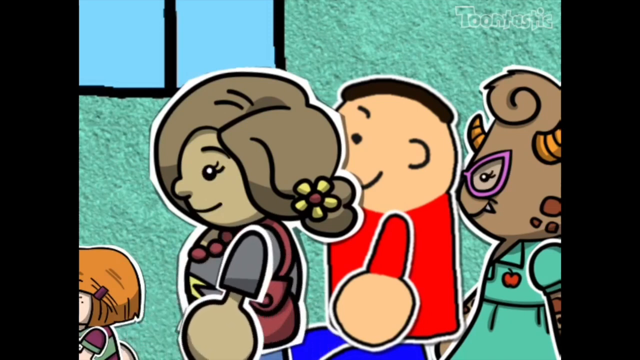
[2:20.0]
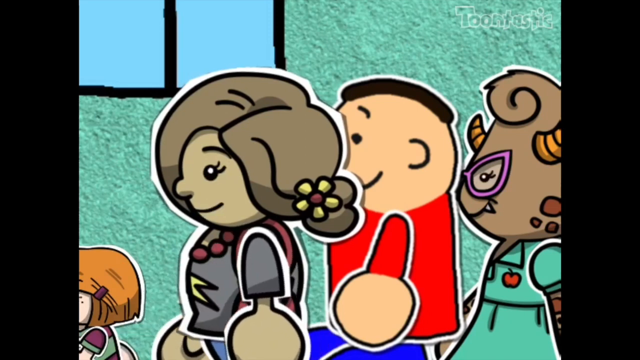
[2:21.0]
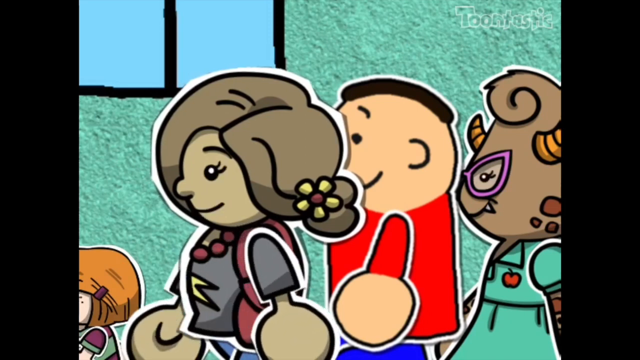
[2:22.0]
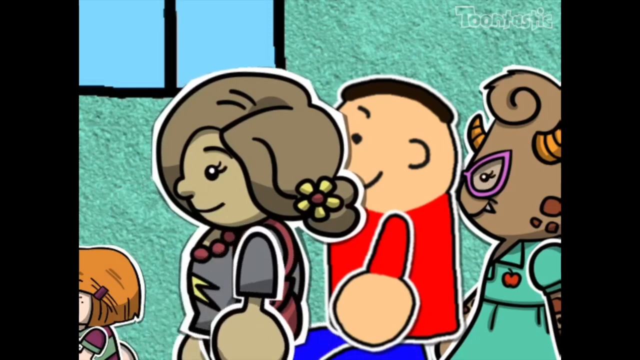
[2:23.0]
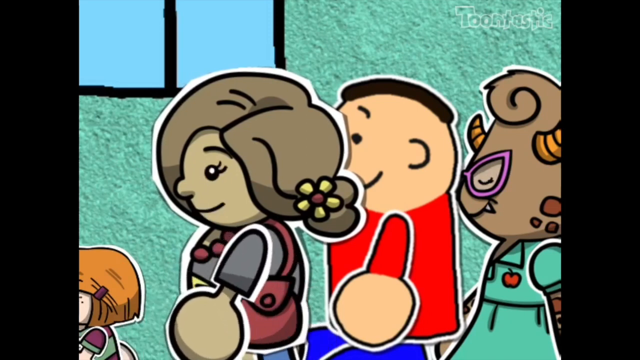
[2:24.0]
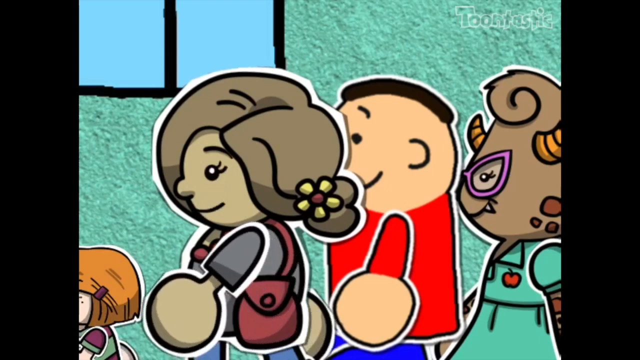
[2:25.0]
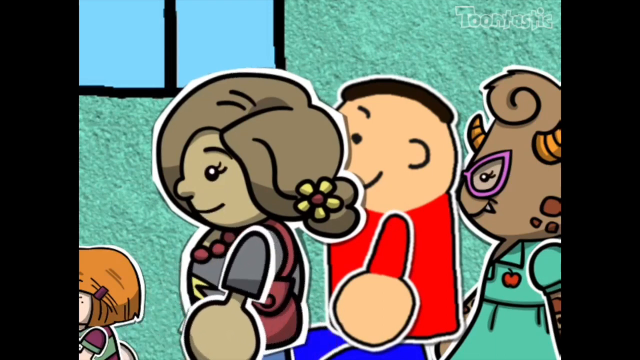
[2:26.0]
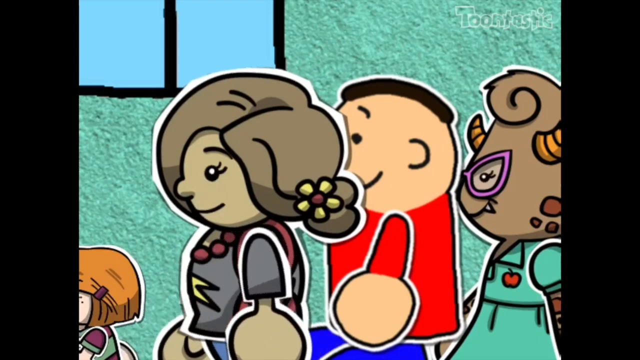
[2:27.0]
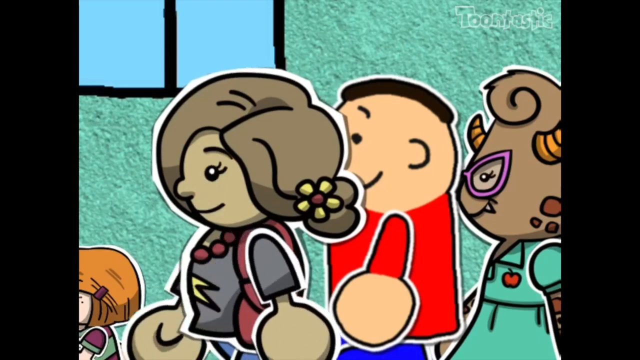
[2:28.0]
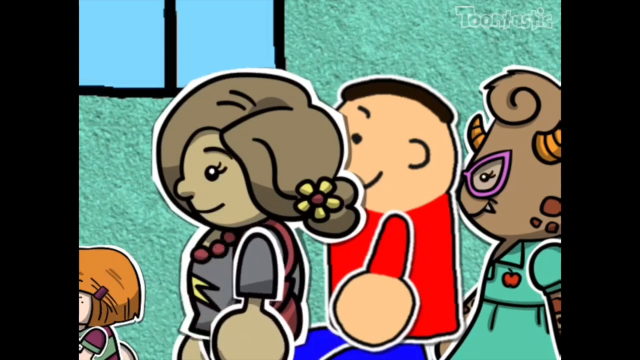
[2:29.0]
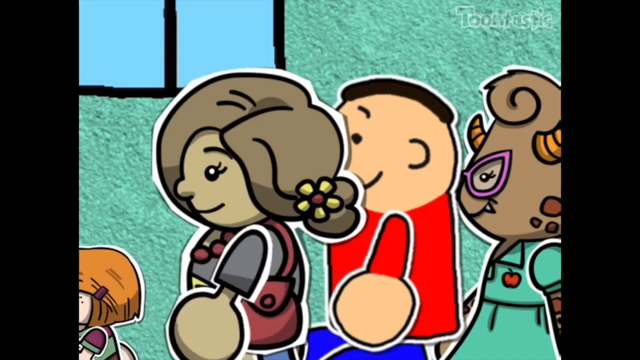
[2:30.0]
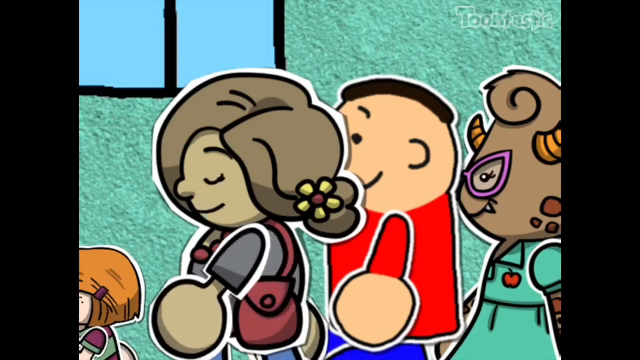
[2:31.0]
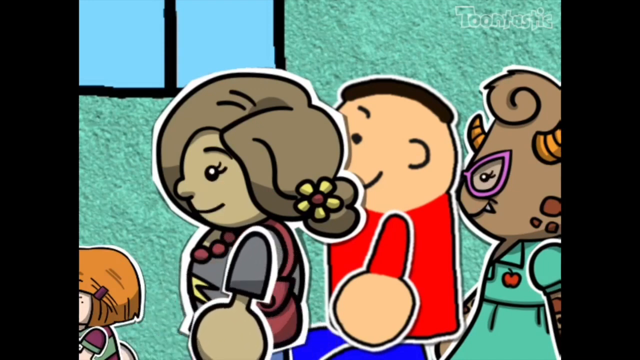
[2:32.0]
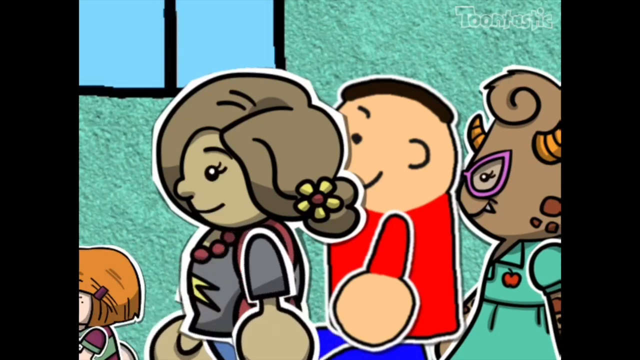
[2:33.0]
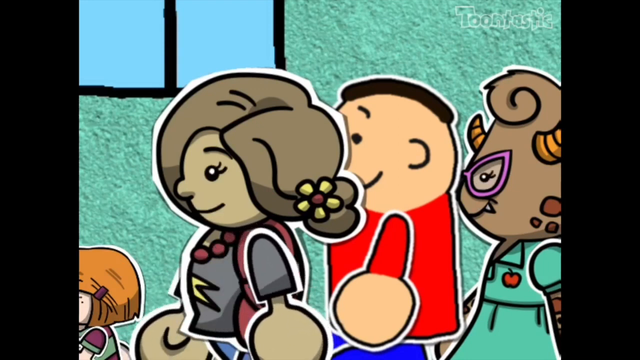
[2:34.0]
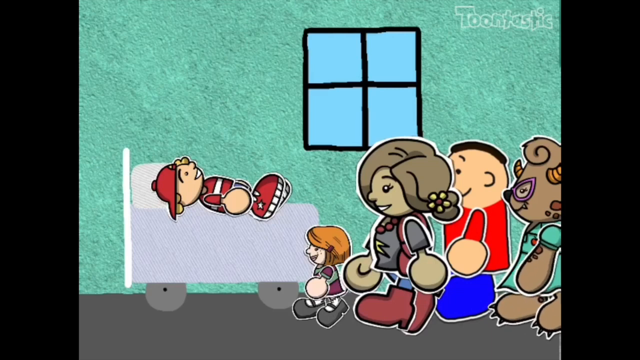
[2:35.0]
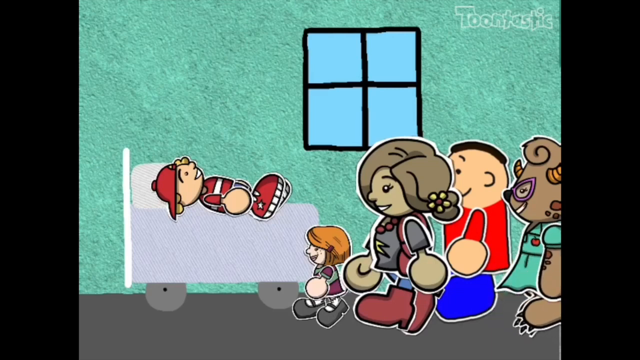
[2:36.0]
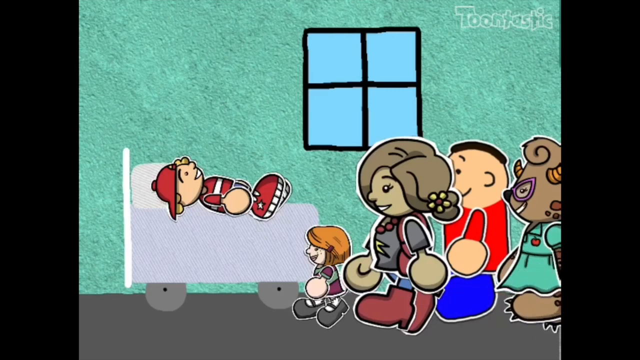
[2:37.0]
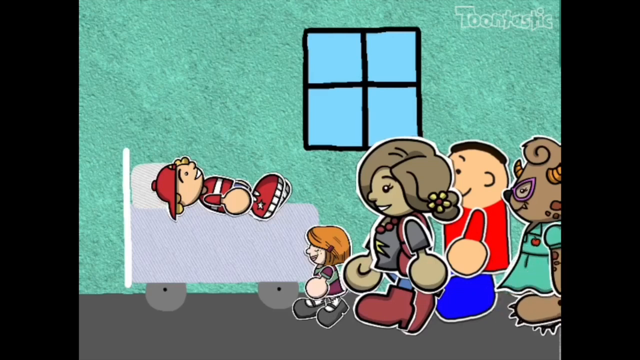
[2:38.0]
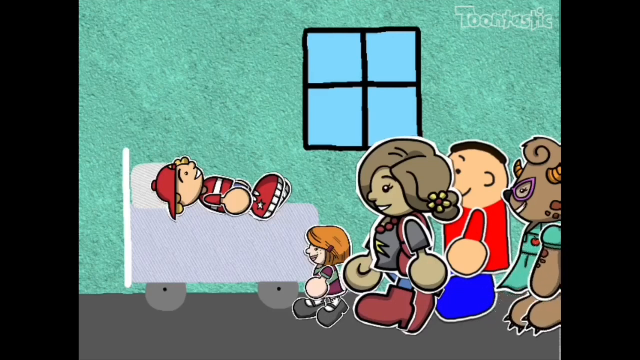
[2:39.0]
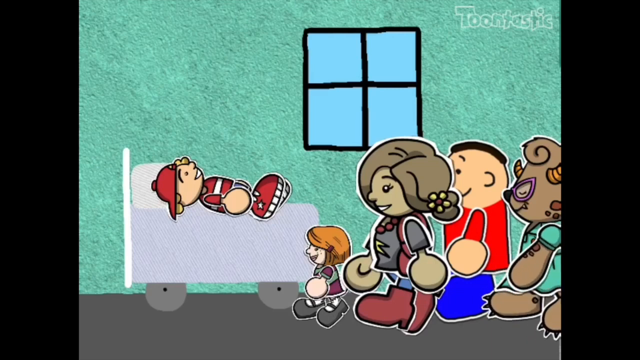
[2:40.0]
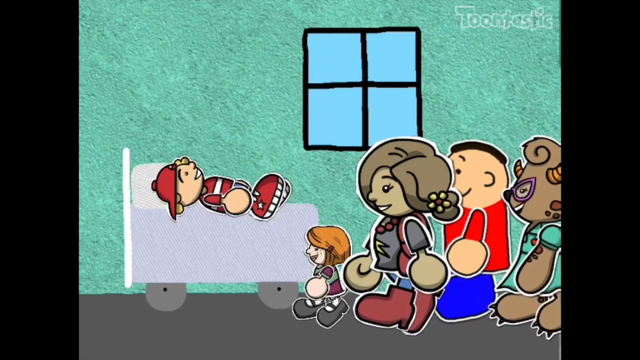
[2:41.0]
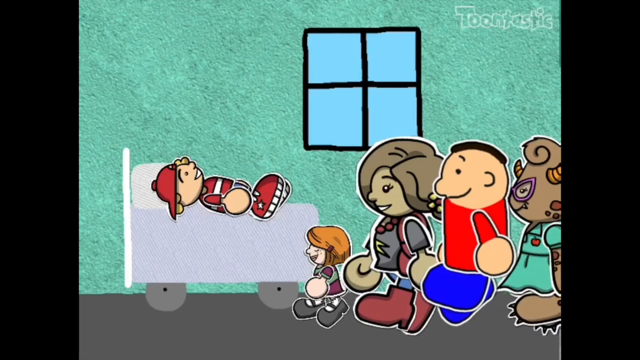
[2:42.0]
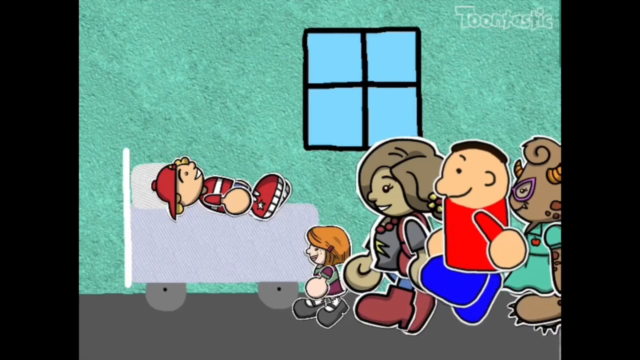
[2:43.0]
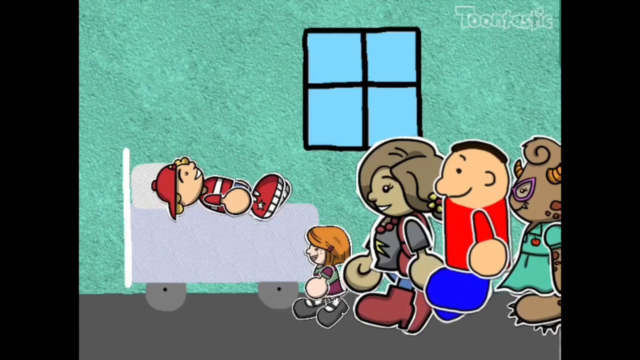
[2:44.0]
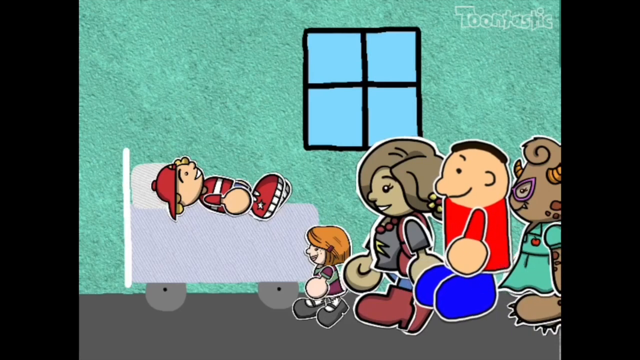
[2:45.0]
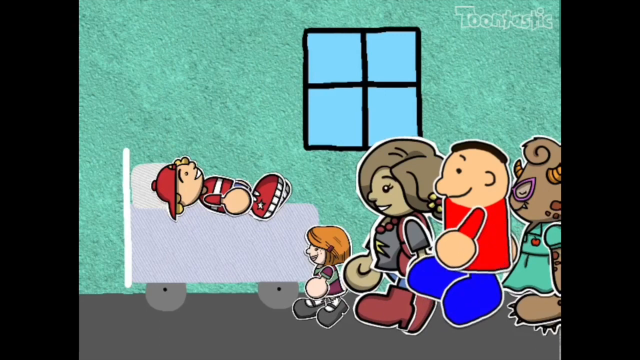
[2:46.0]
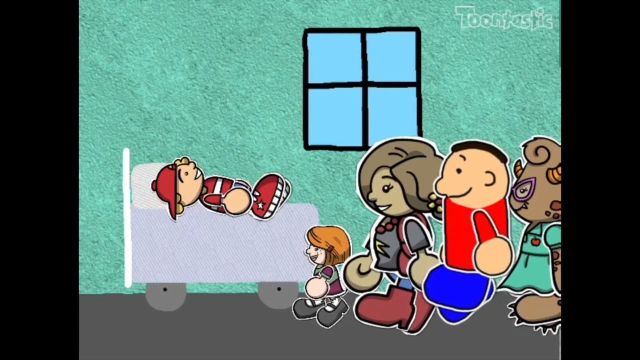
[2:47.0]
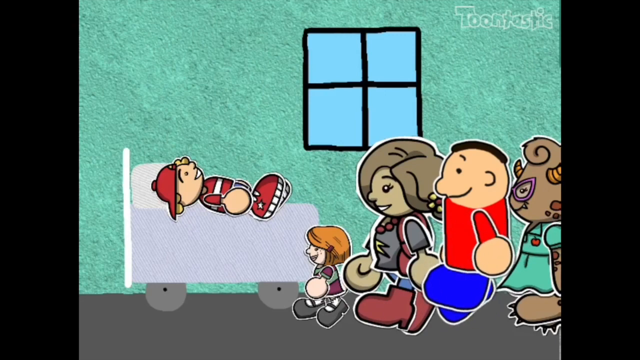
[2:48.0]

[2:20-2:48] The friends are still visiting in the hospital ward. The ward is painted grey-green, with a green window that has black stripes on it, and the floor is grey. The bed where the patient lies is white, though not very white. The patient and friends converse, and the visiting boy is also talking.